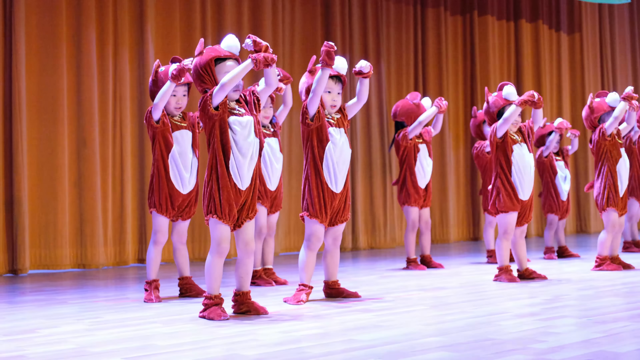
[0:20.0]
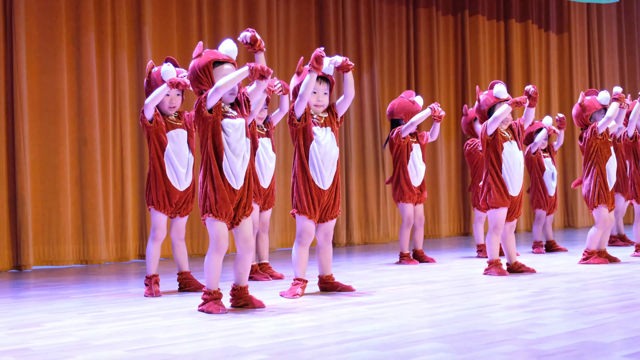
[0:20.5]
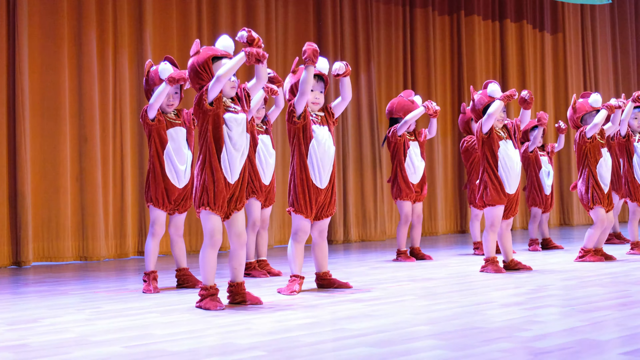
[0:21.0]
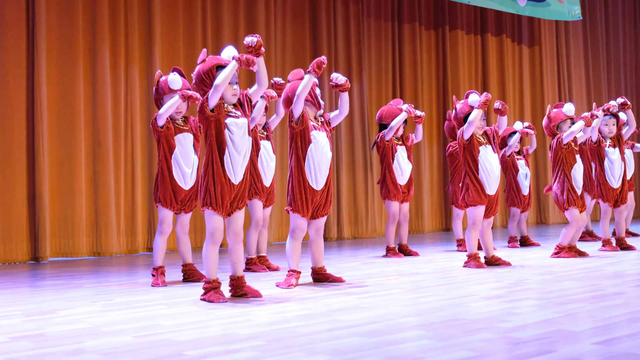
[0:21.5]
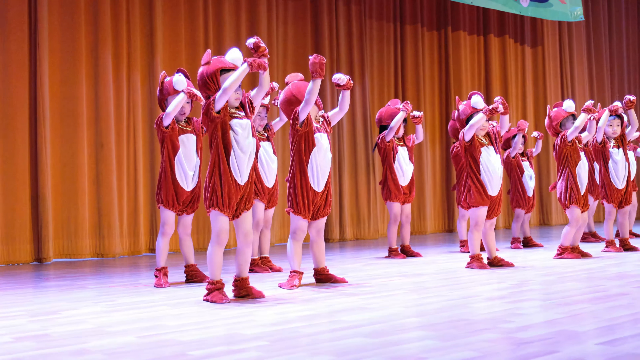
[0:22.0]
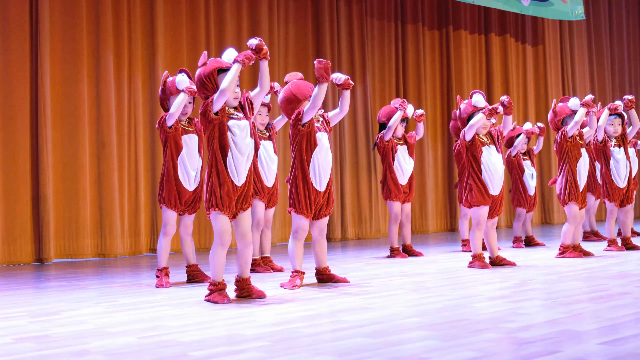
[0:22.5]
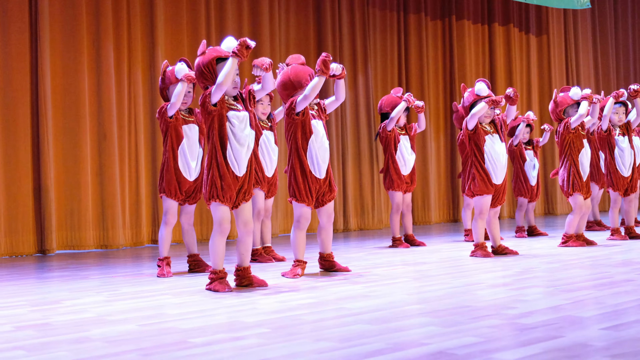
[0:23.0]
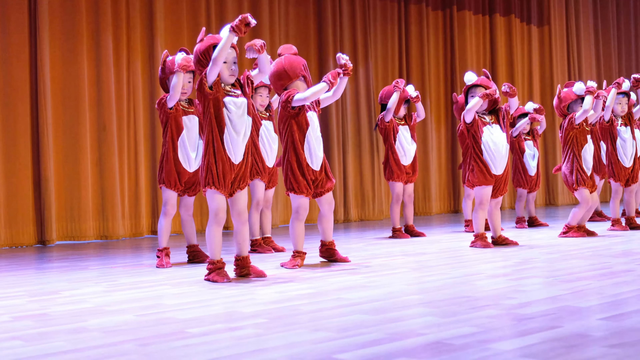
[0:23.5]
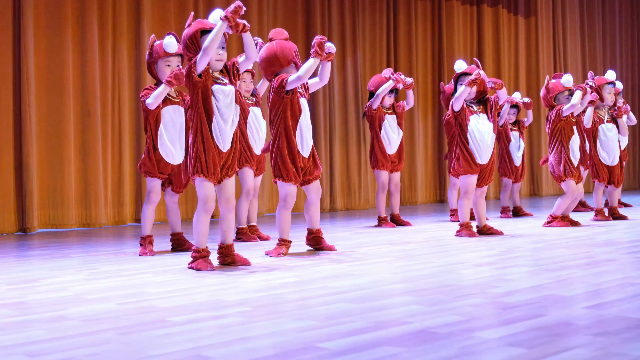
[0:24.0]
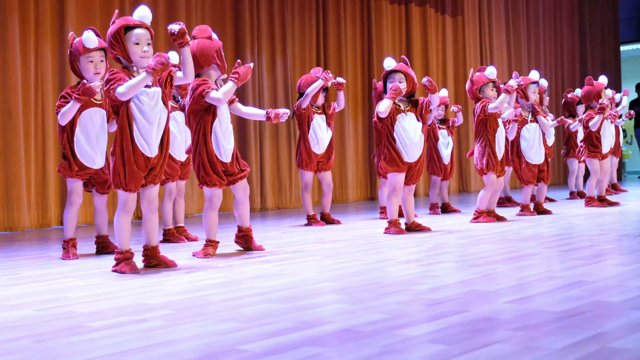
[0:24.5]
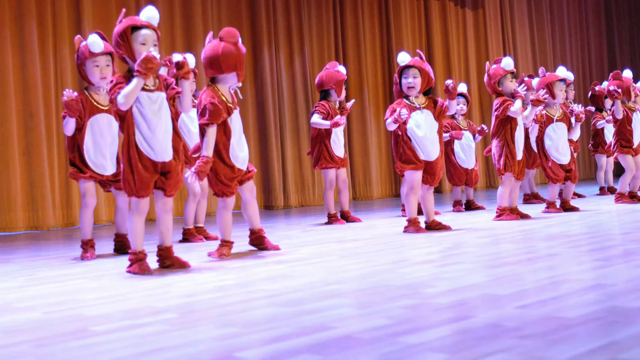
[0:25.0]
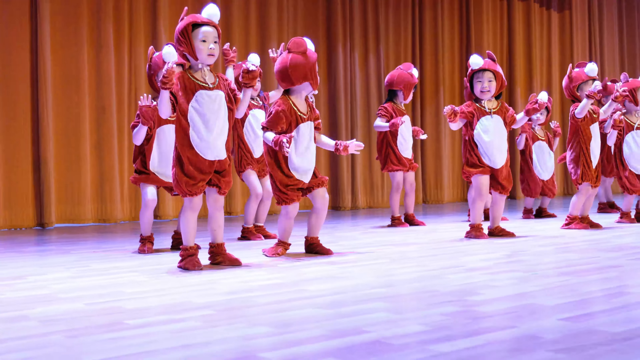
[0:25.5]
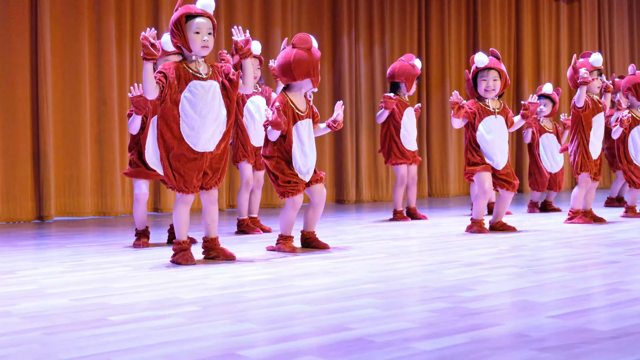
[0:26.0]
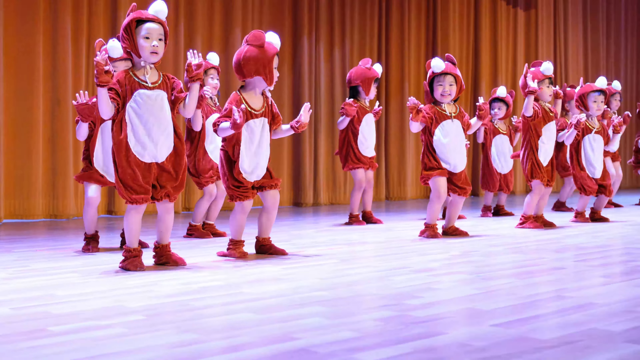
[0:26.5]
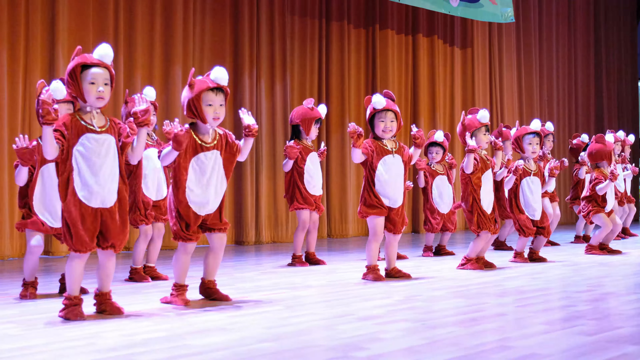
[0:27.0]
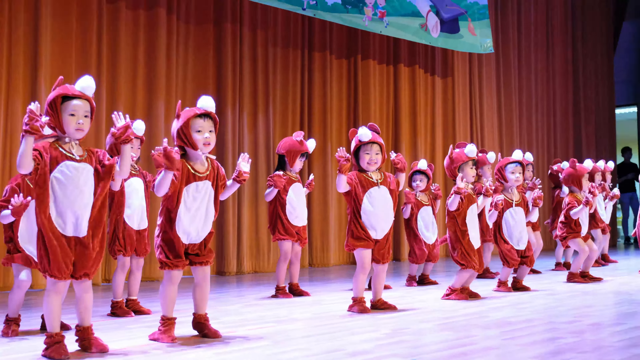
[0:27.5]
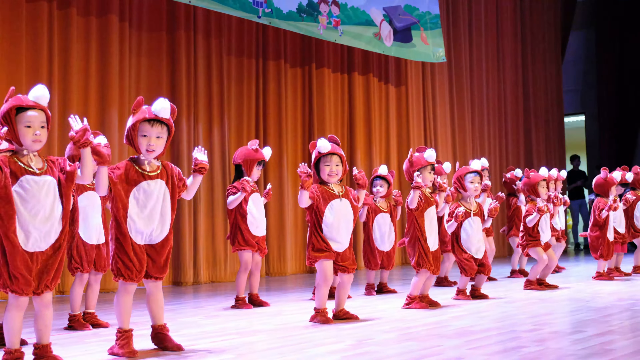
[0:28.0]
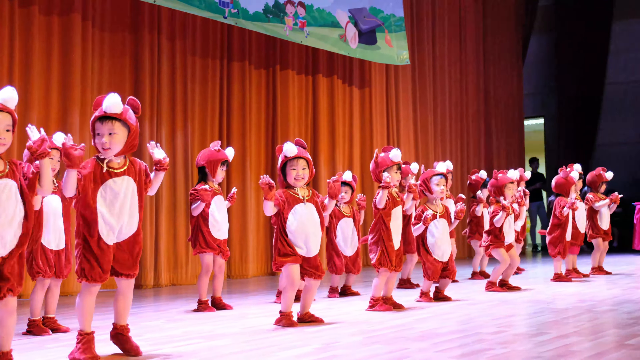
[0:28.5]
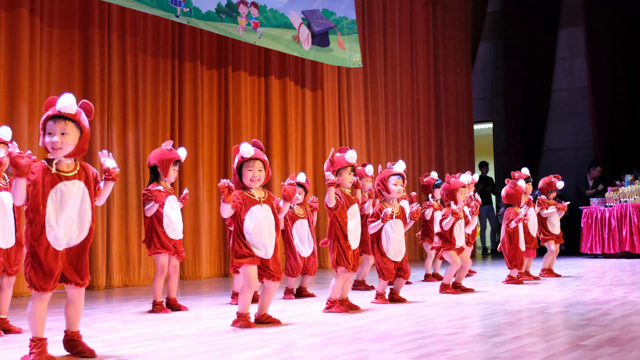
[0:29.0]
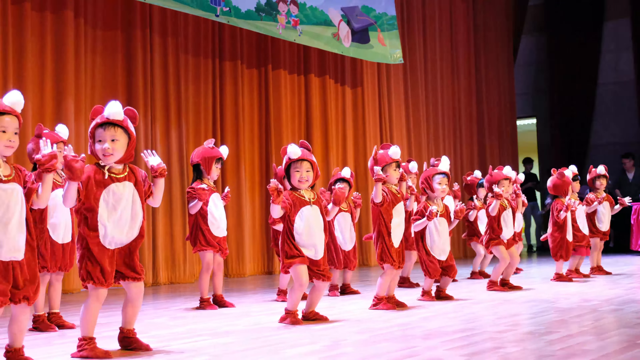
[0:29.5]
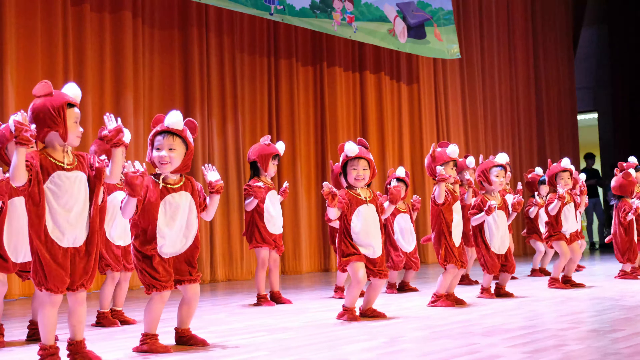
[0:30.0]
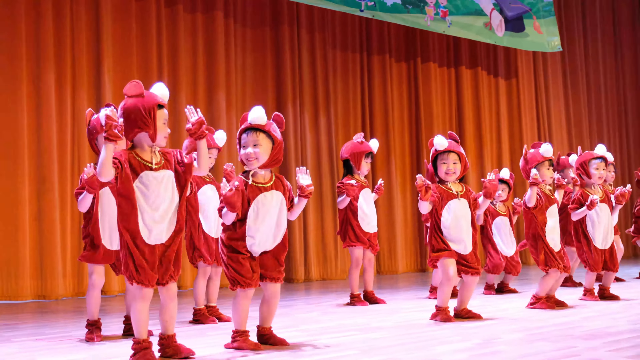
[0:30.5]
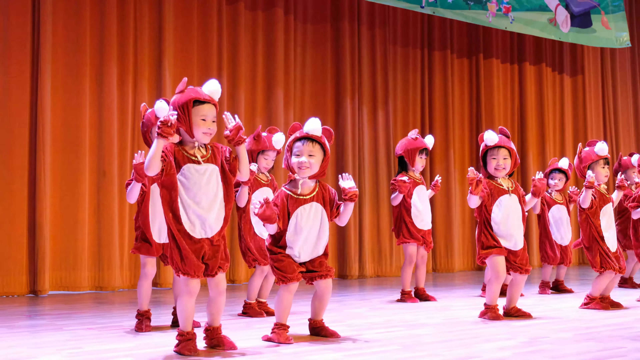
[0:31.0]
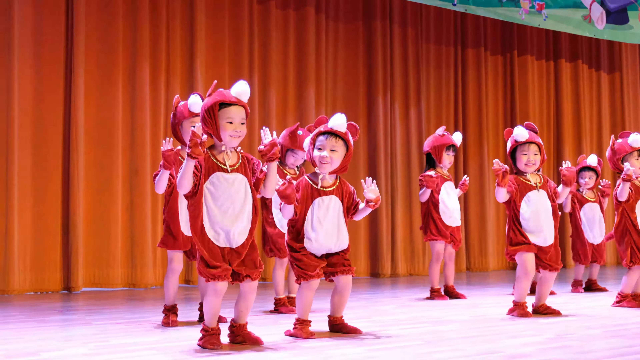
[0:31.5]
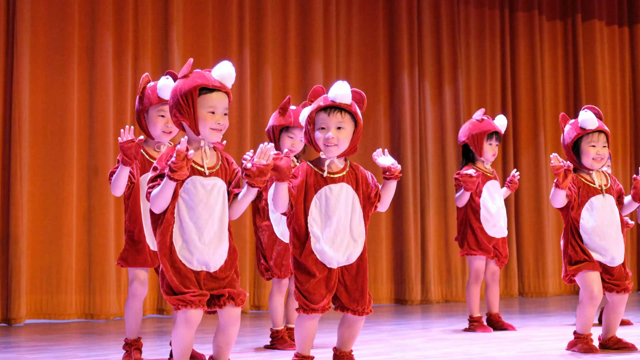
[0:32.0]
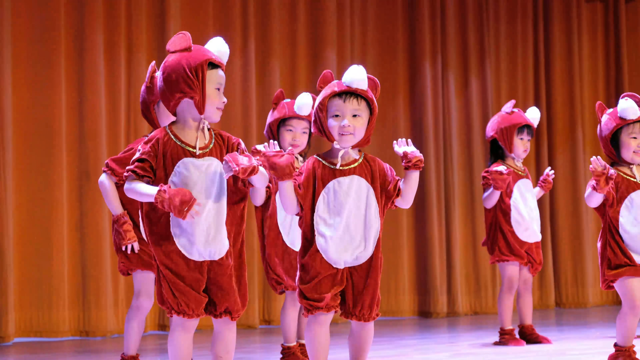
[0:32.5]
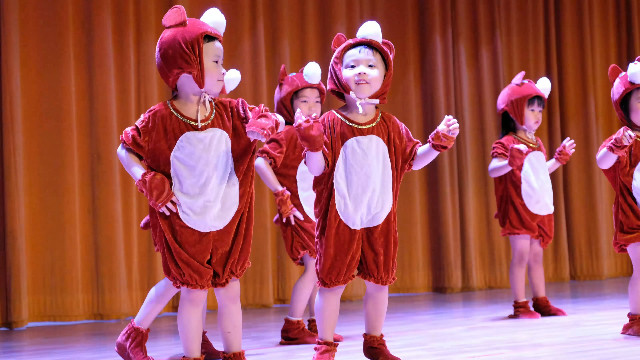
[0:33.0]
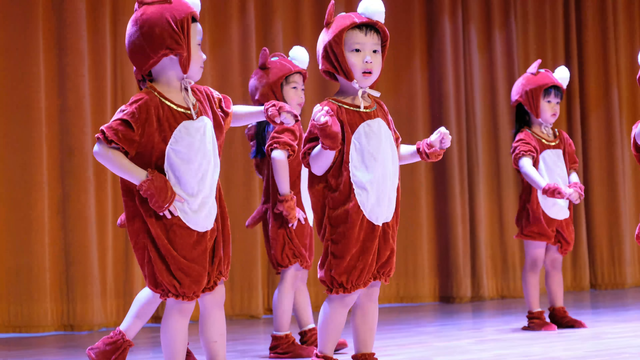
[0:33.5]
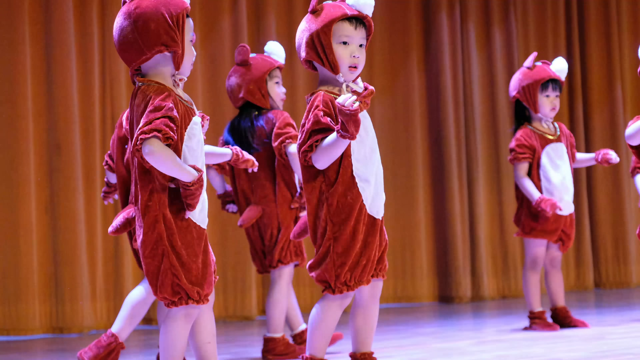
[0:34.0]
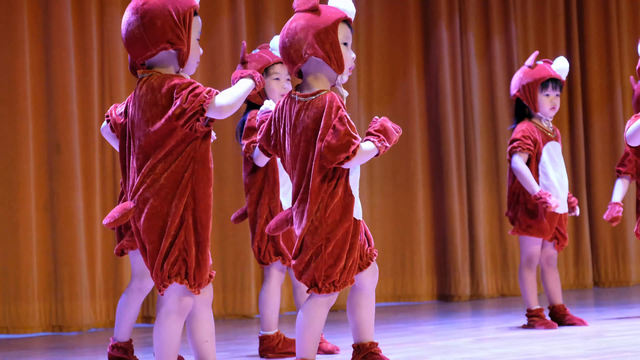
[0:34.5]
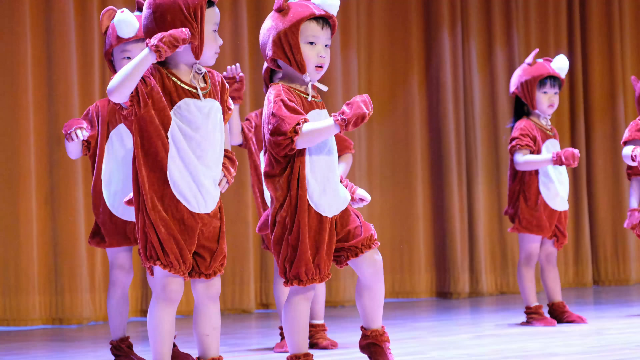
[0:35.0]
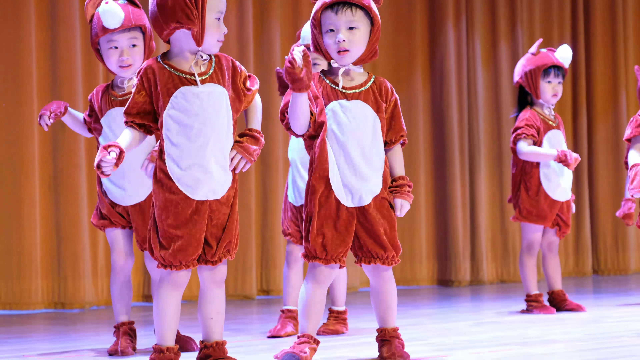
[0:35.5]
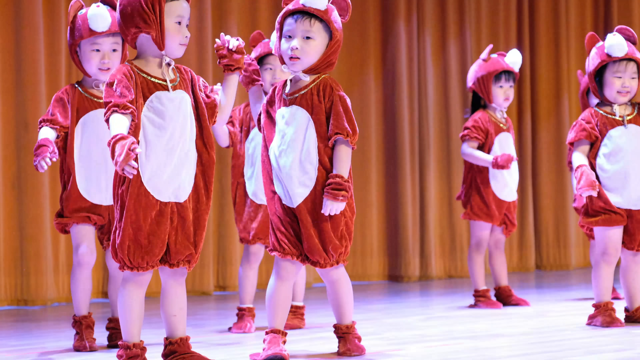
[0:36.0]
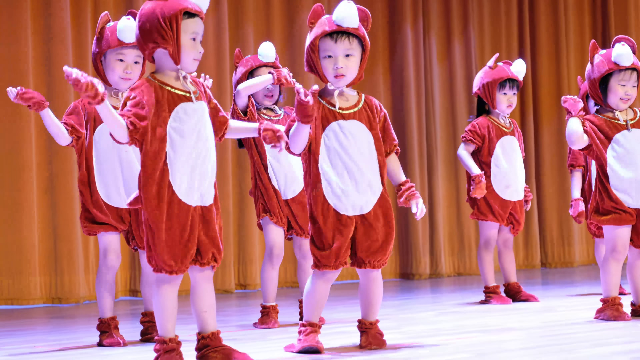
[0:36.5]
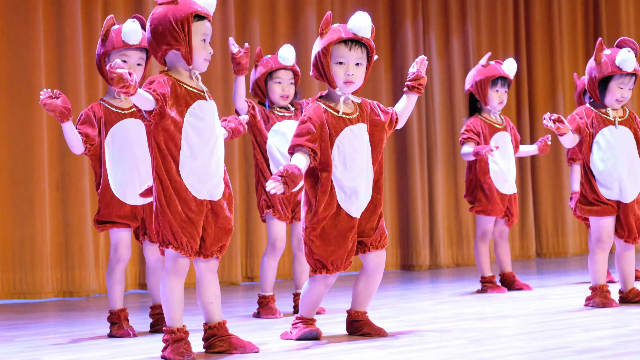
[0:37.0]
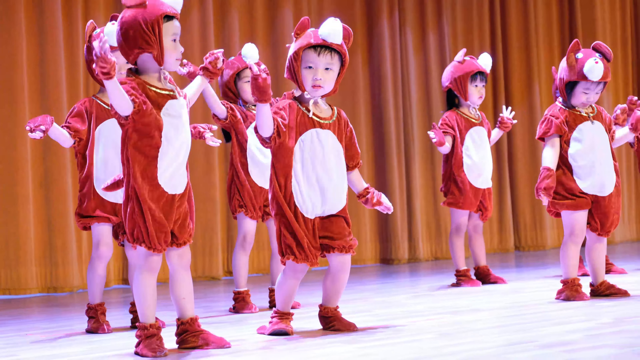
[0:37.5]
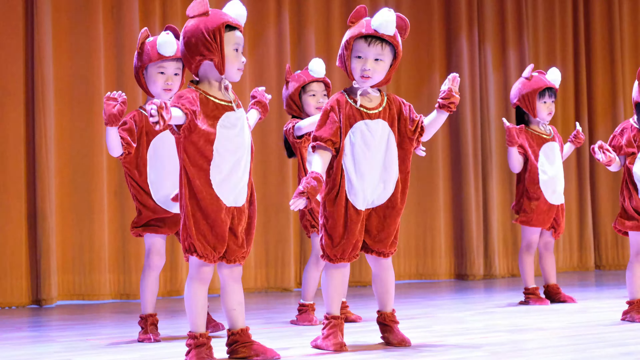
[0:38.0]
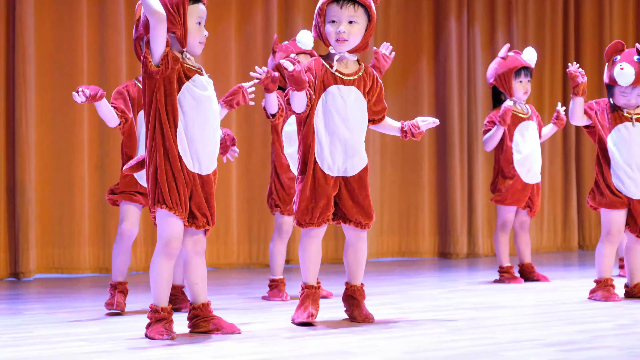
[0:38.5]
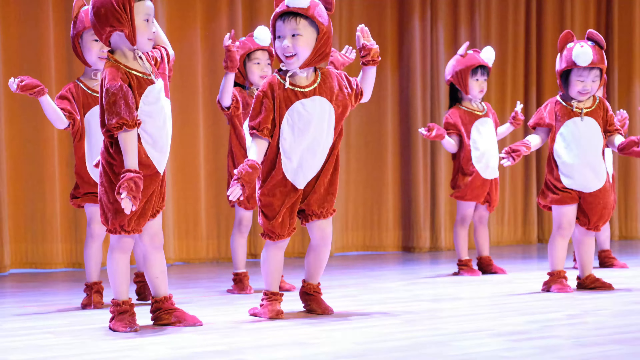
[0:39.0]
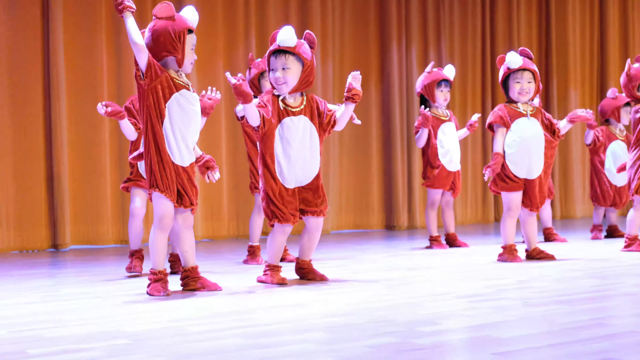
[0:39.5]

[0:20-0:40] A group of little kids performs on stage, all dressed in the same red and white dinosaur onesie costumes. The stage seems to be at a school or community venue, so it is probably a recital or some kind of event. The kids dance in sync, repeatedly doing a move where they twirl their arms above their heads as if stirring invisible soup while bouncing on their knees. The camera zooms in a few times on one or two of the kids, apparently a parent trying to get a better view of their child in the middle of the group.